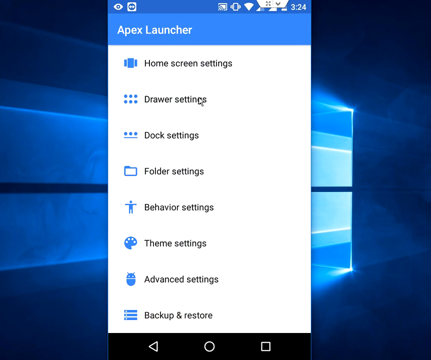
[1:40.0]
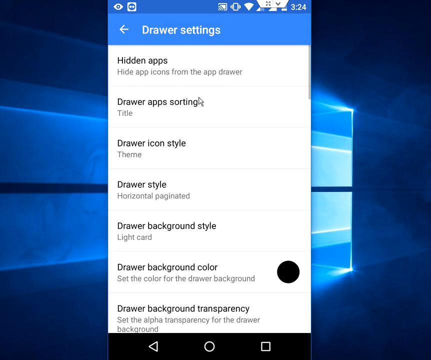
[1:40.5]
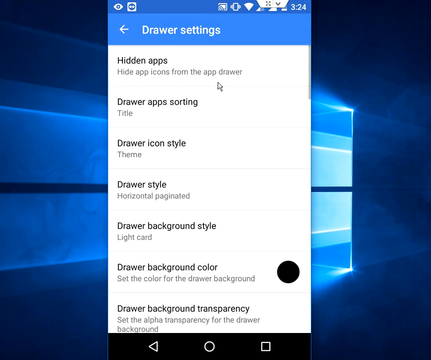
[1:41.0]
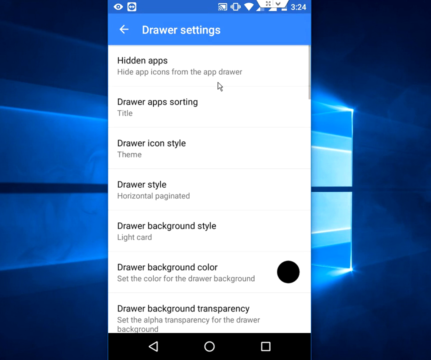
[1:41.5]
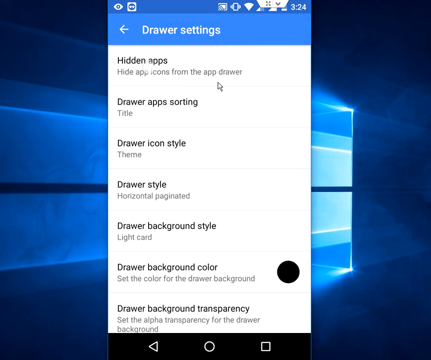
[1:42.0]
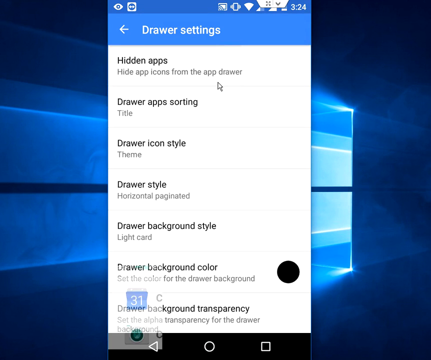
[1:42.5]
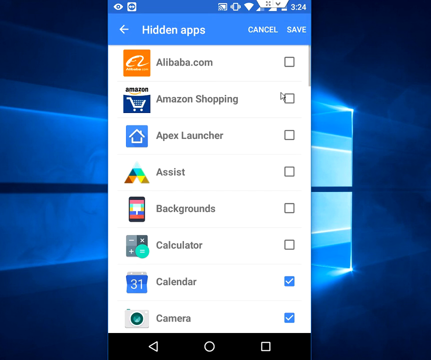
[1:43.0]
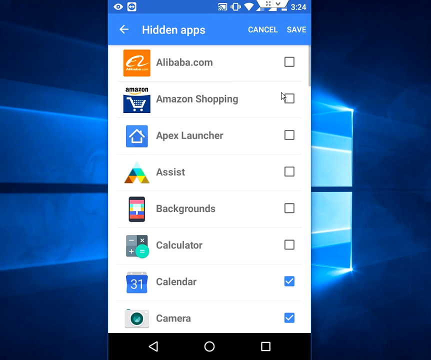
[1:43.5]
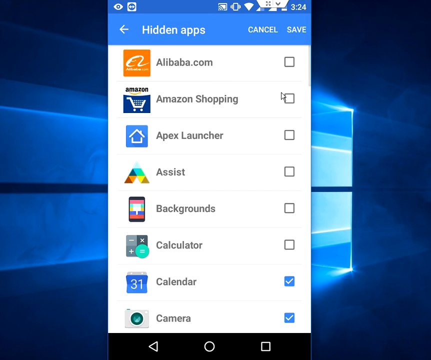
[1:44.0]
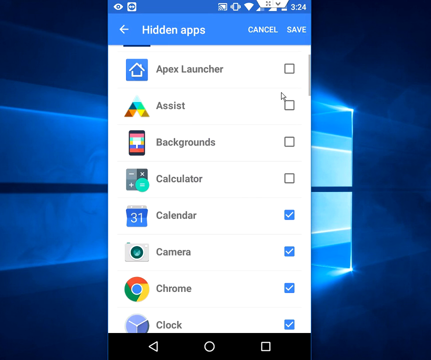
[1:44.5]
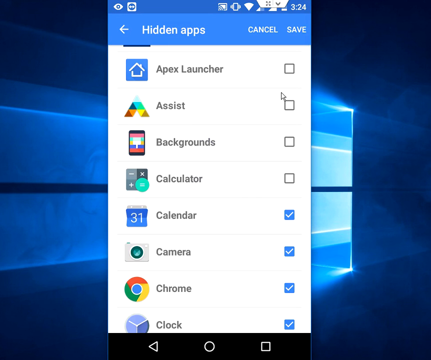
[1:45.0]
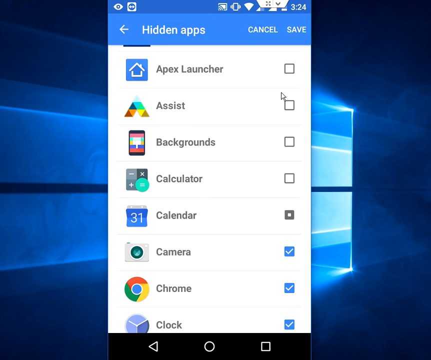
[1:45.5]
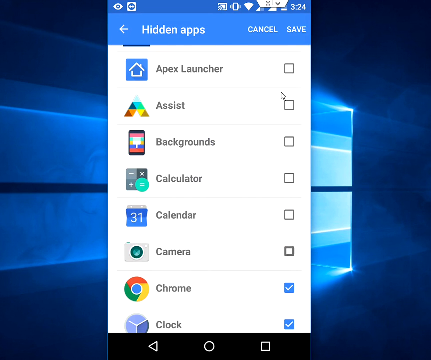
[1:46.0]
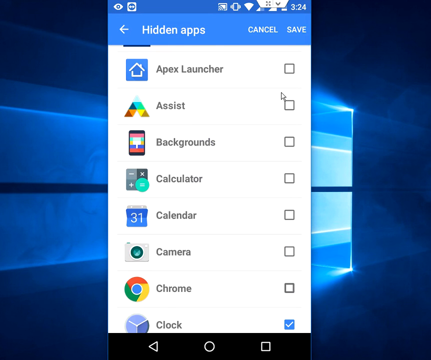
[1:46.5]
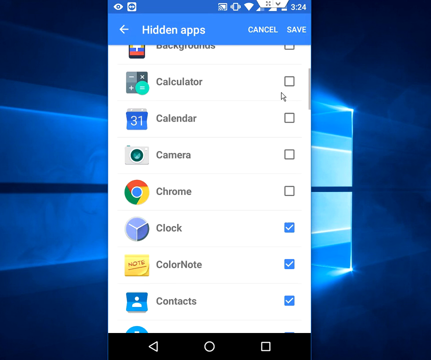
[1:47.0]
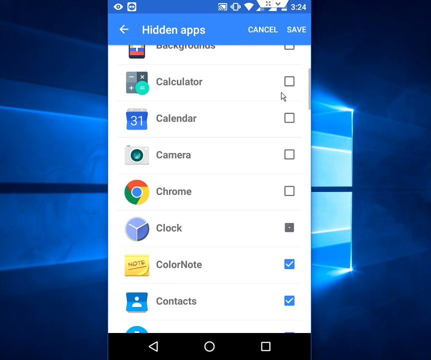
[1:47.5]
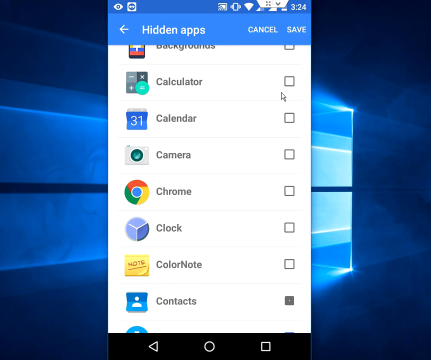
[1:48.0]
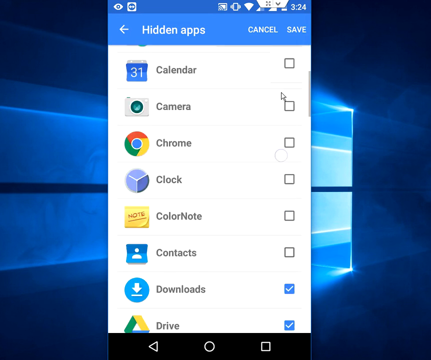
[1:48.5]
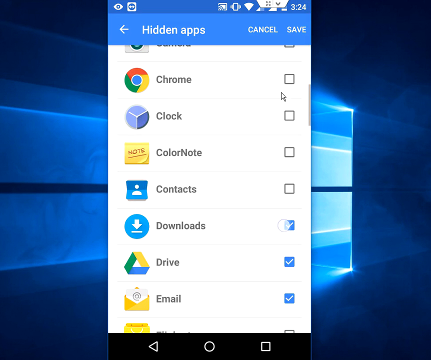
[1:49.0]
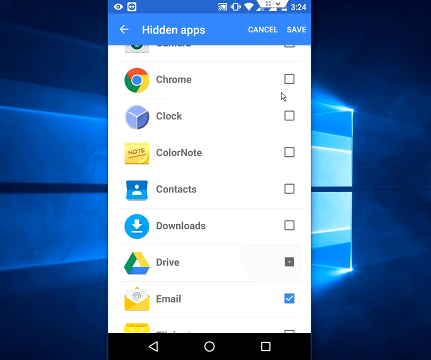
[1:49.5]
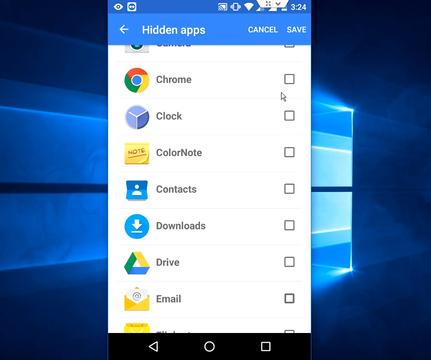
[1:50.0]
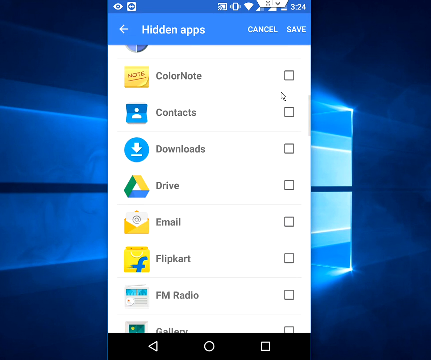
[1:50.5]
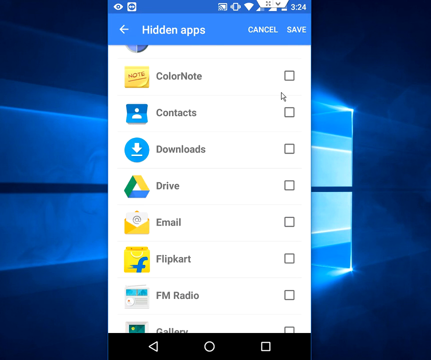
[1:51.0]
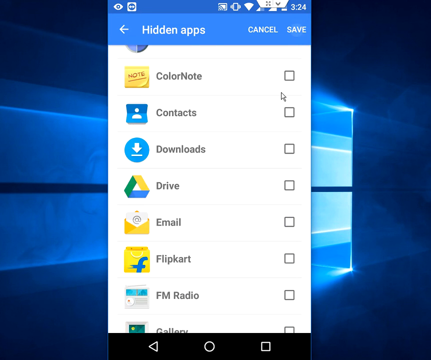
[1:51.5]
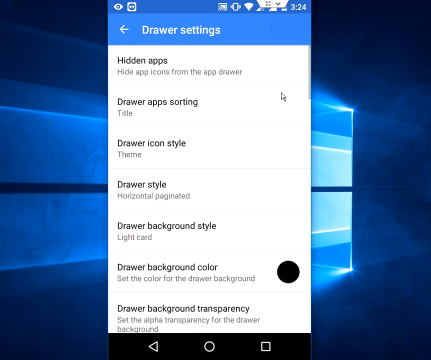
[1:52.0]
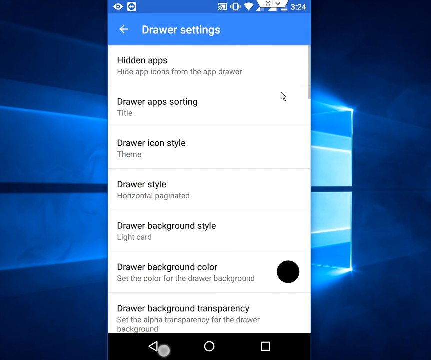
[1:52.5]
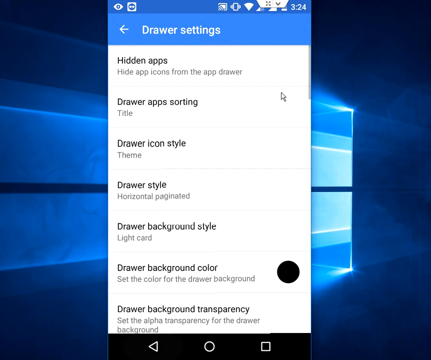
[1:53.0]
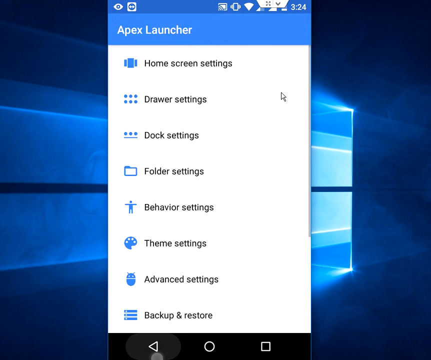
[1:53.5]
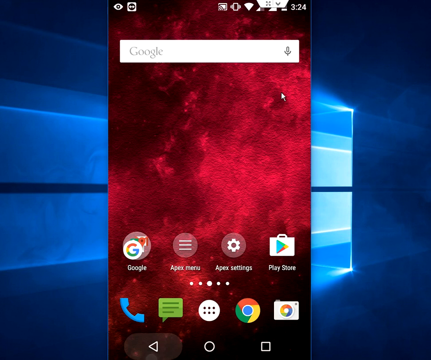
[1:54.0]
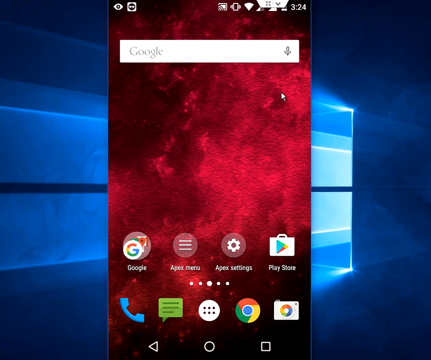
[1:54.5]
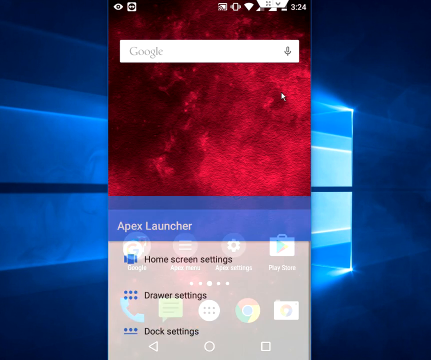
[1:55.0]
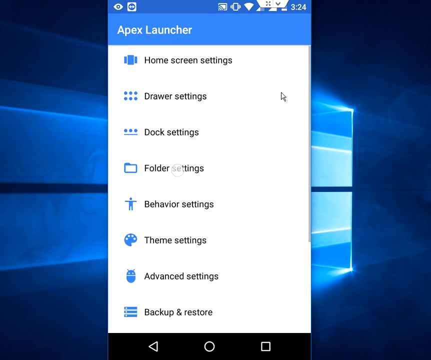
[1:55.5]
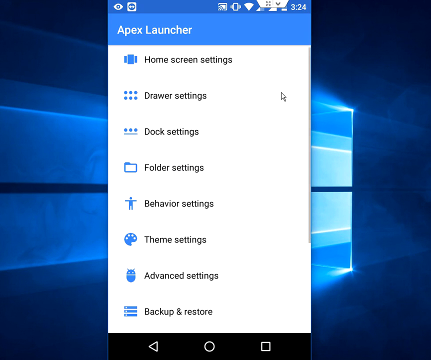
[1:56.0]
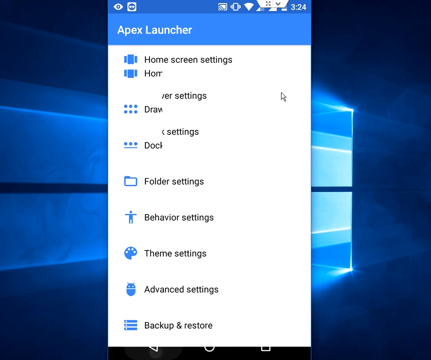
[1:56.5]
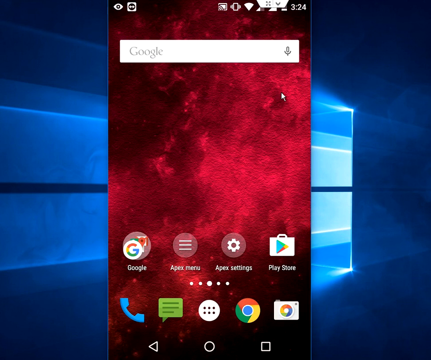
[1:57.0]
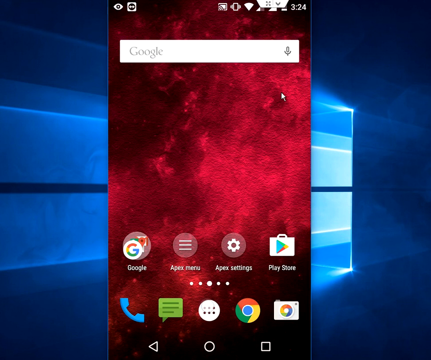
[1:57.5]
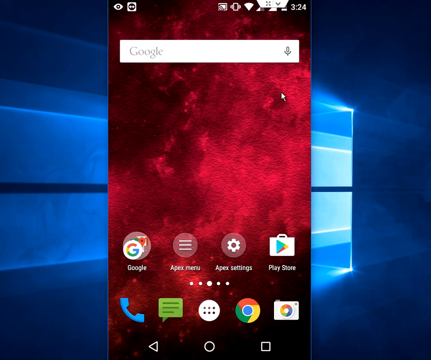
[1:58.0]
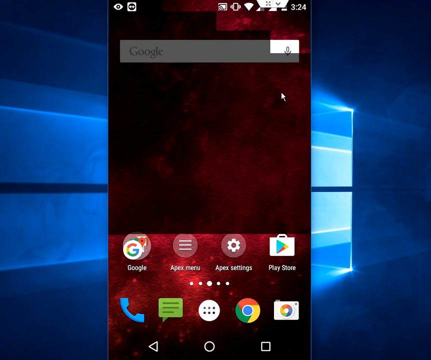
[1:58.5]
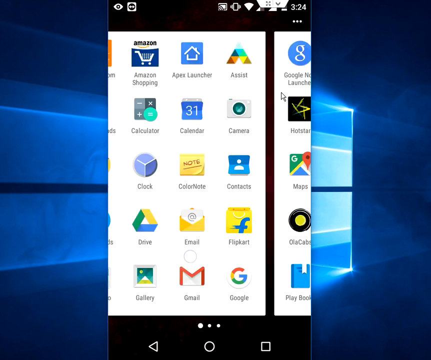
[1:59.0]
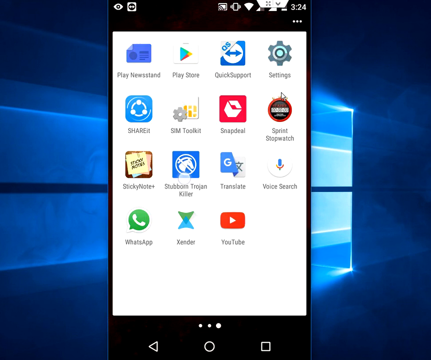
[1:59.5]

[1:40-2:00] The user goes back to drawer settings and into hidden apps, selects and then deselects all of them, goes back and saves, and returns to the main screen. They click on Apex Settings again before going back to showing their apps. The list goes by very fast, but the quick scroll seems to show that the apps were restored to the all apps list. Among the apps shown from G onward are Google Now Launcher, Google+, Help, Hotstar, iShorts, IRCTC Connect, Indicator, Maps, Messaging, MX Player, NTES, Olacaps, Phone, Photos, Photoscan, Play Books, Play Games, Play Movies and TV, and Play Music. Further on, through the letters up to Y, there are apps such as the Play Store, Translate, and YouTube, among several more, before the list is closed.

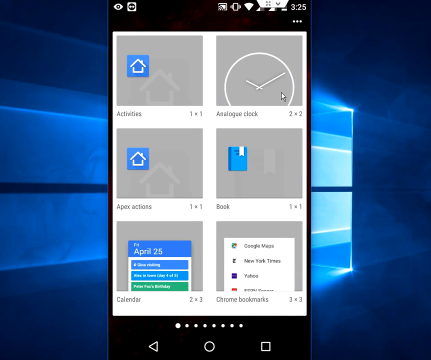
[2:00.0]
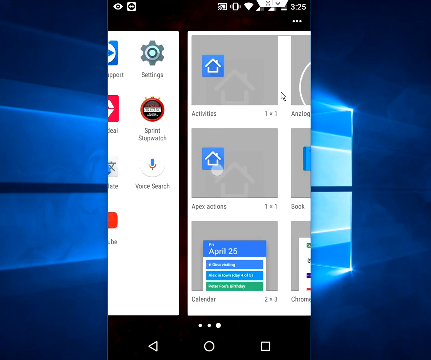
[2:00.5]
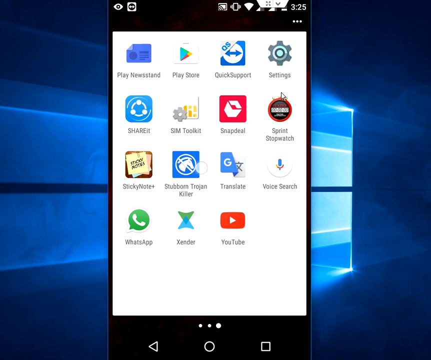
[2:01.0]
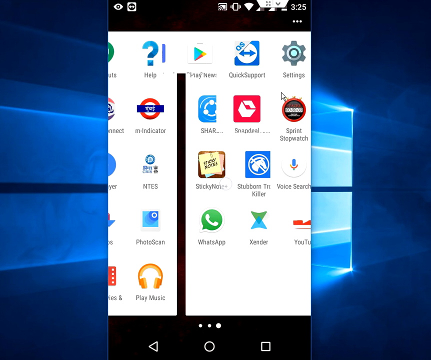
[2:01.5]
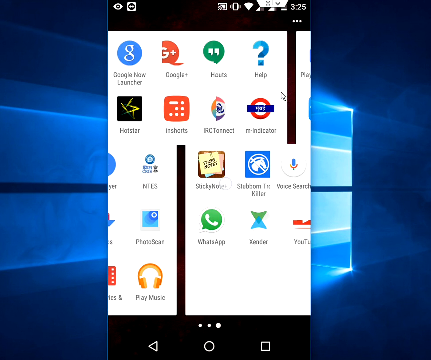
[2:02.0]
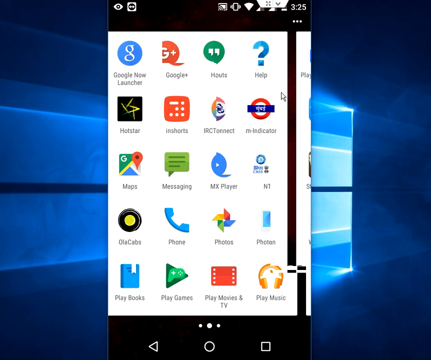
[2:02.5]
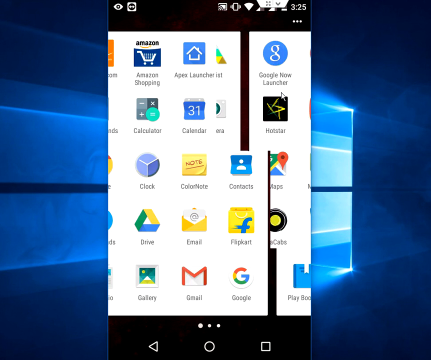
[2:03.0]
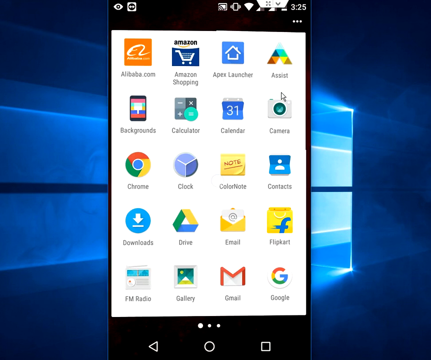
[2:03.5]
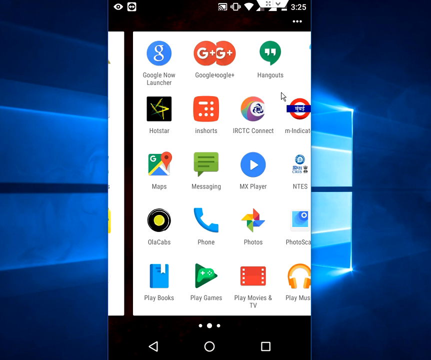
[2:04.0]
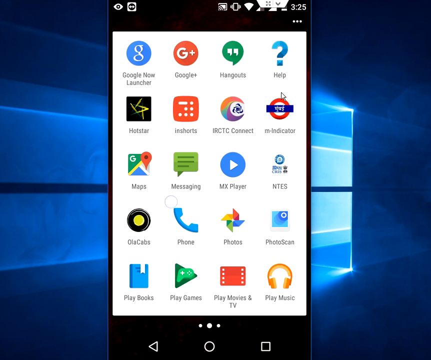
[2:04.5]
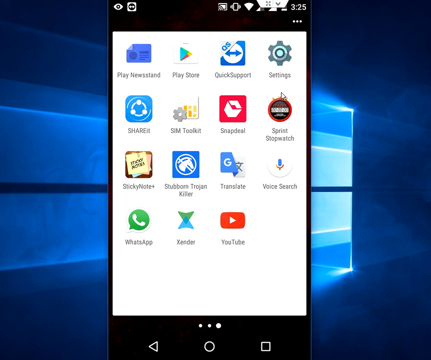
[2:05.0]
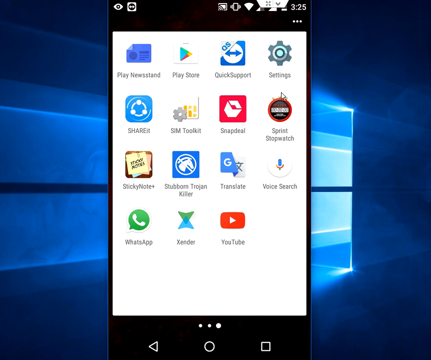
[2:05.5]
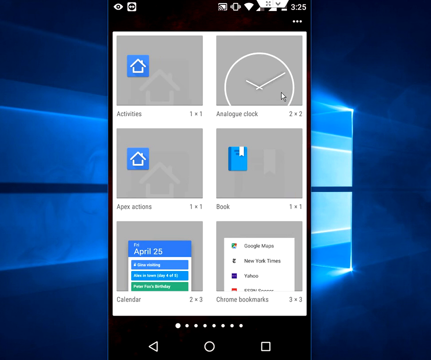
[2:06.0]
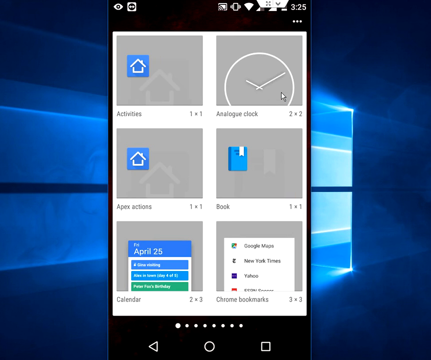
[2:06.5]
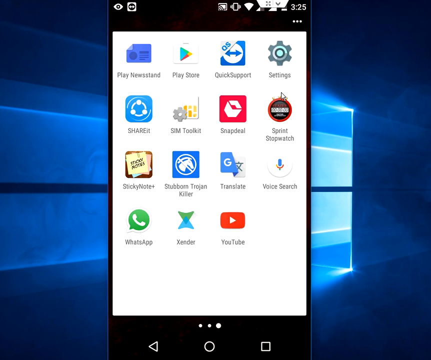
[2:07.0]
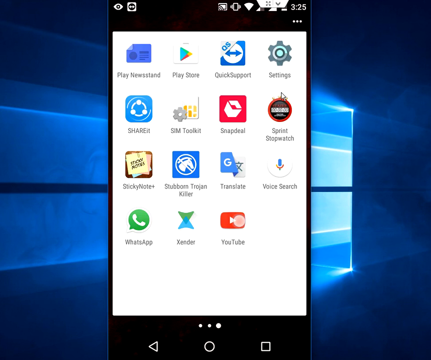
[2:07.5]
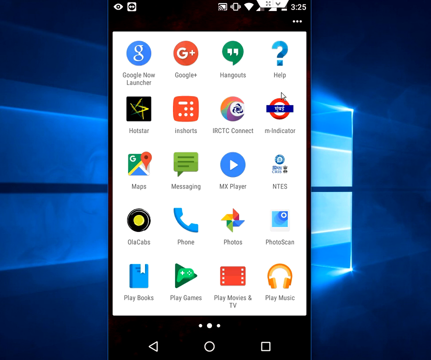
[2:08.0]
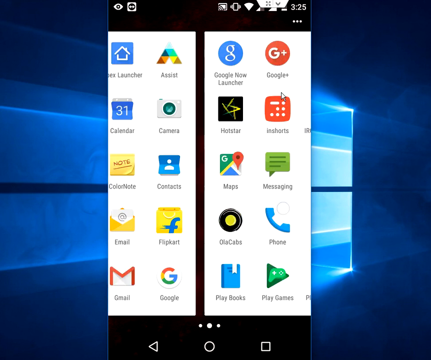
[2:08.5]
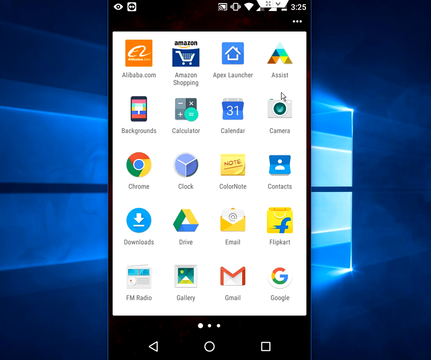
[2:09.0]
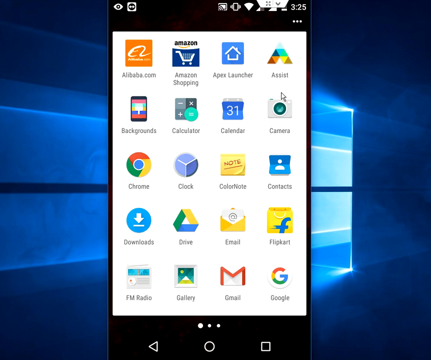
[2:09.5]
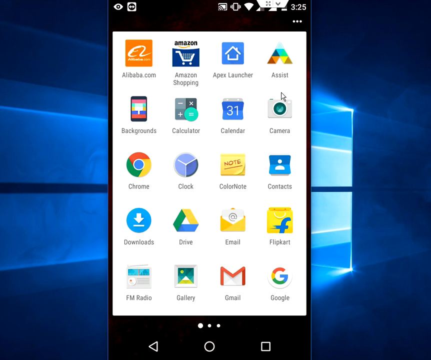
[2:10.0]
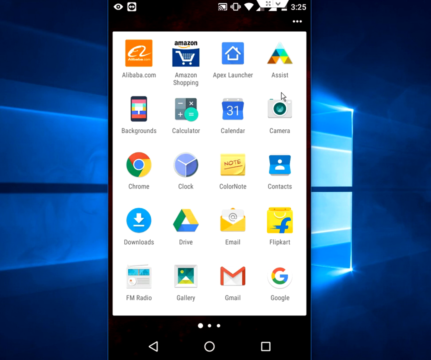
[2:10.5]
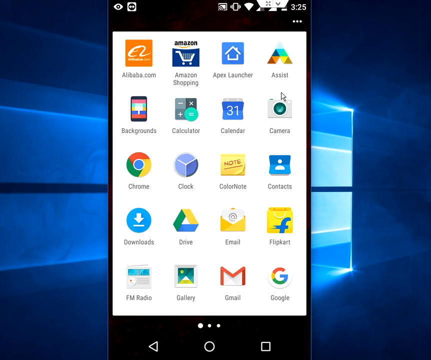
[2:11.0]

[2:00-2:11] A view shows six different items arranged in two columns of three rows. In the first row, the first is Activities, one-by-one, showing the Apex app inside it, and the second is Analog clock, two-by-two, showing a time that does not match the phone's actual time. In the second row are Apex actions, one-by-one, and Books, one-by-one, showing a book app that looks like a bookmark coming out. In the third row are Calendar, with an example showing April 25th, and Chrome bookmarks, which are two-by-three and three-by-three respectively. The user then scrolls through the apps, showing that all of them have been restored, goes back to the two-column screen, and scrolls back again, sort of repeating the earlier steps.